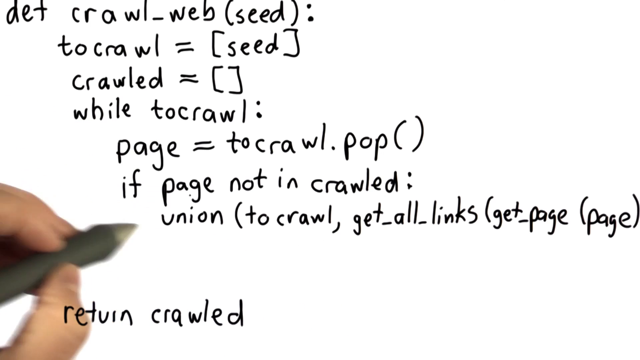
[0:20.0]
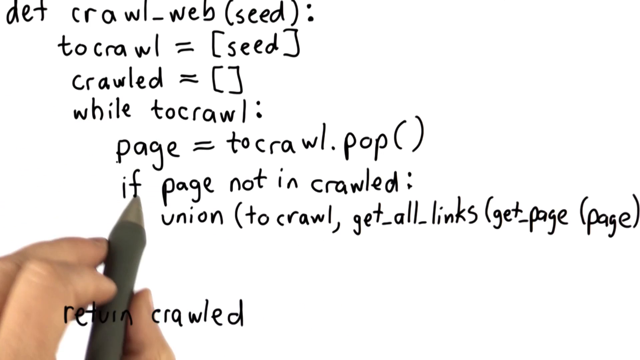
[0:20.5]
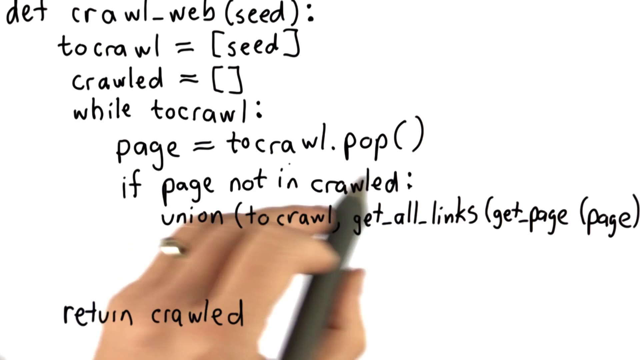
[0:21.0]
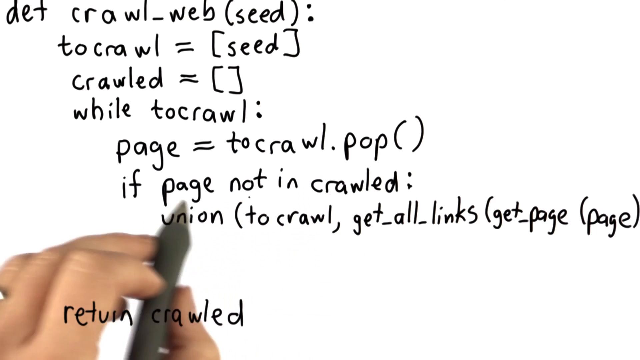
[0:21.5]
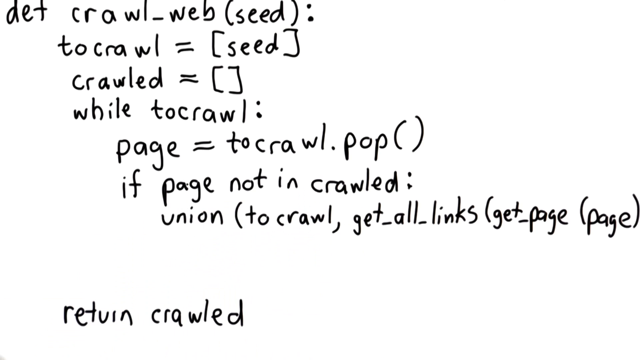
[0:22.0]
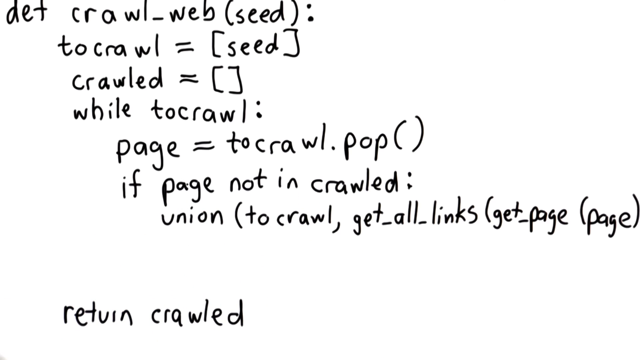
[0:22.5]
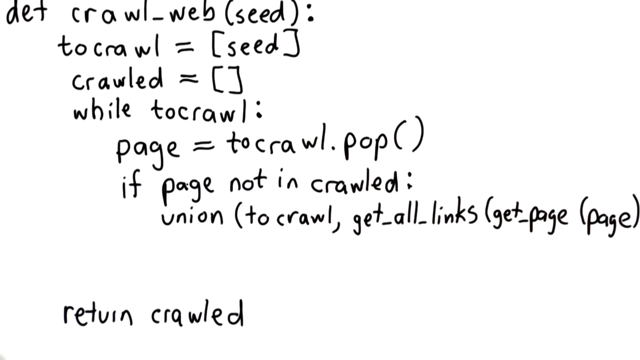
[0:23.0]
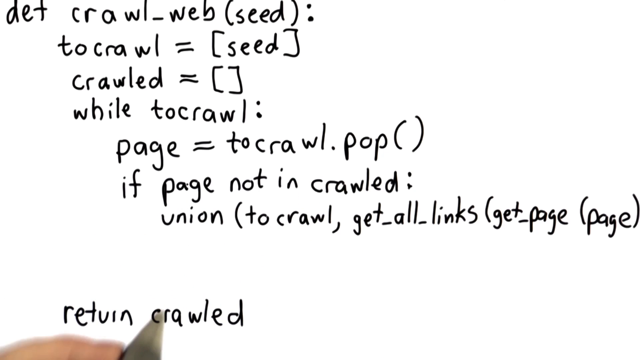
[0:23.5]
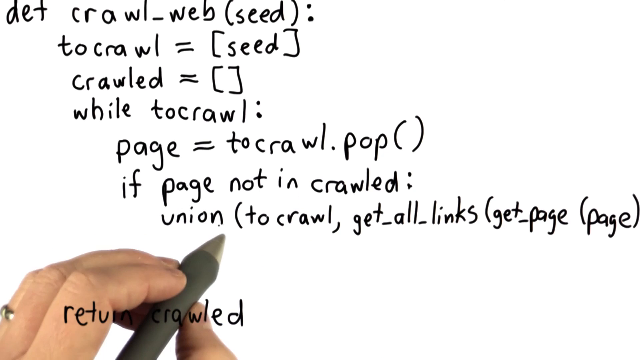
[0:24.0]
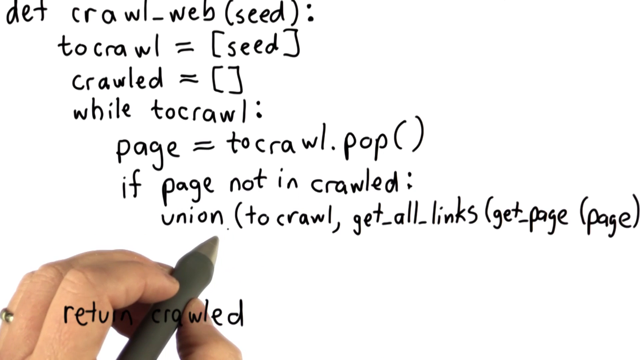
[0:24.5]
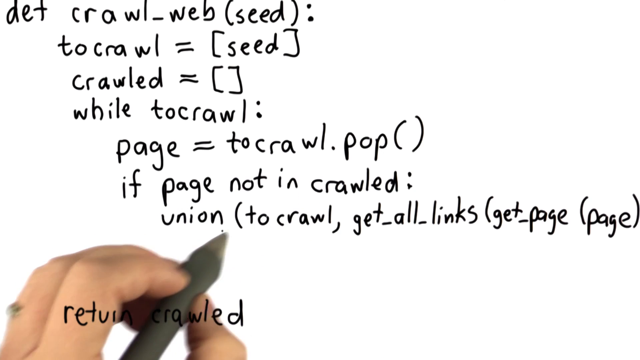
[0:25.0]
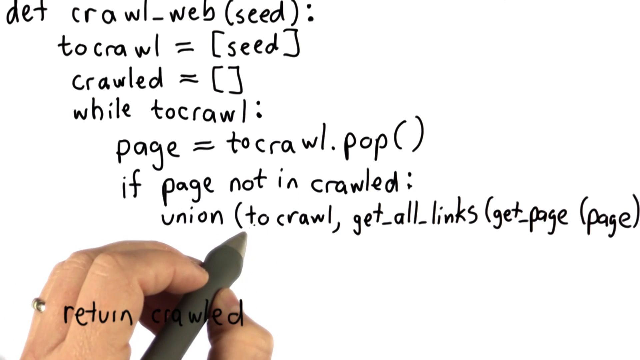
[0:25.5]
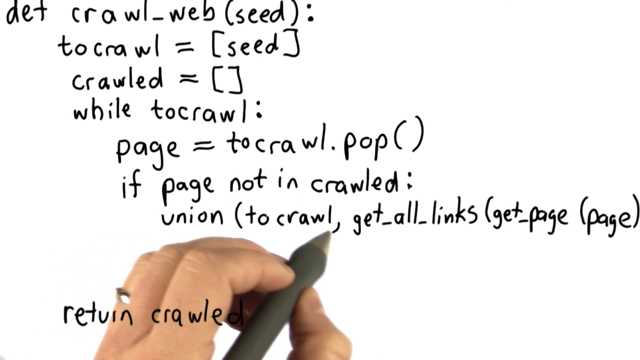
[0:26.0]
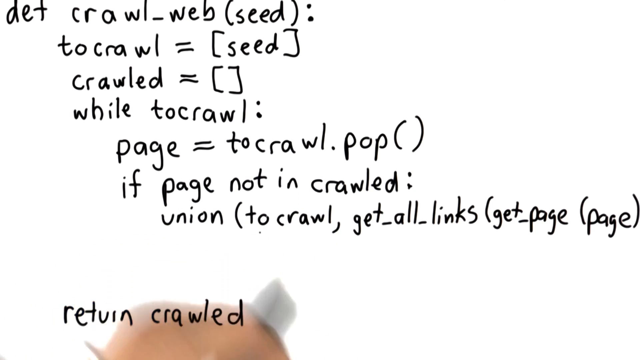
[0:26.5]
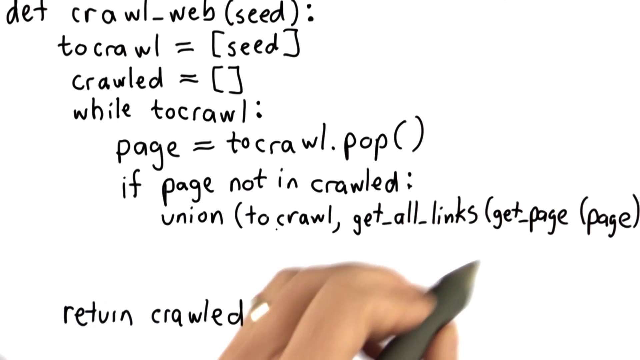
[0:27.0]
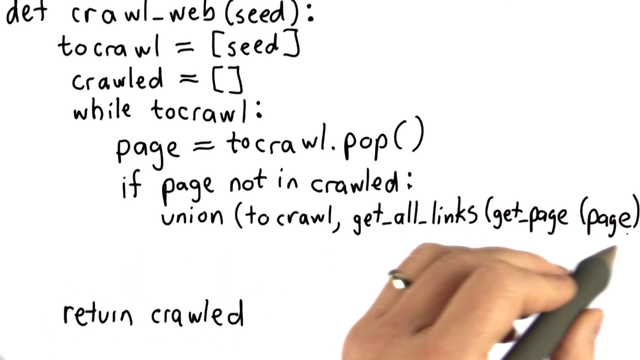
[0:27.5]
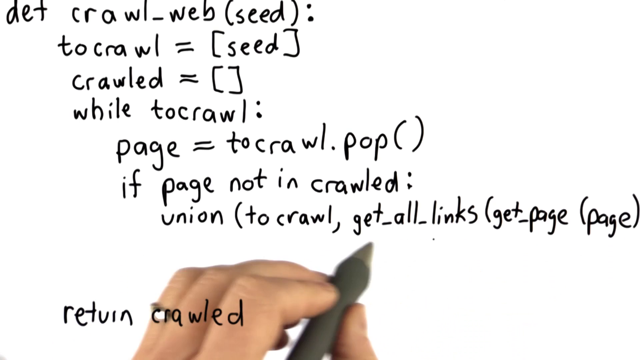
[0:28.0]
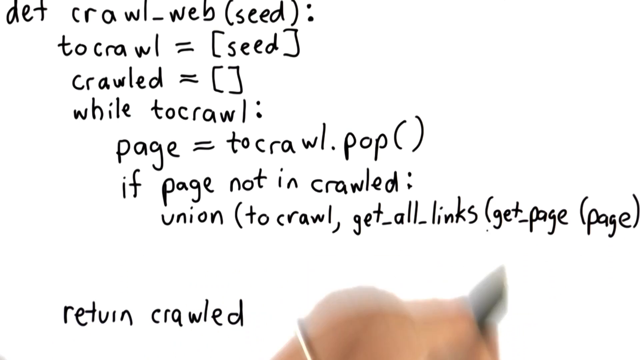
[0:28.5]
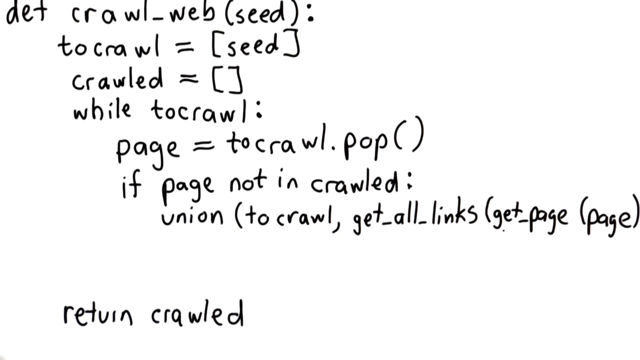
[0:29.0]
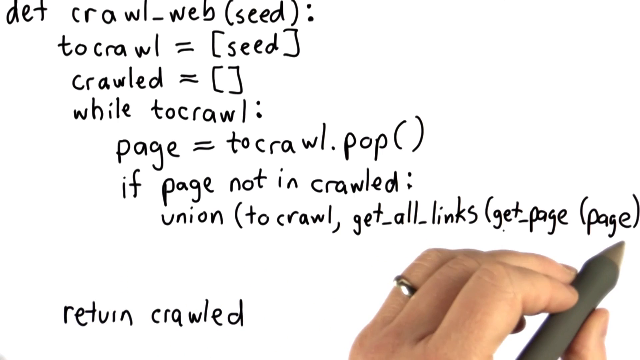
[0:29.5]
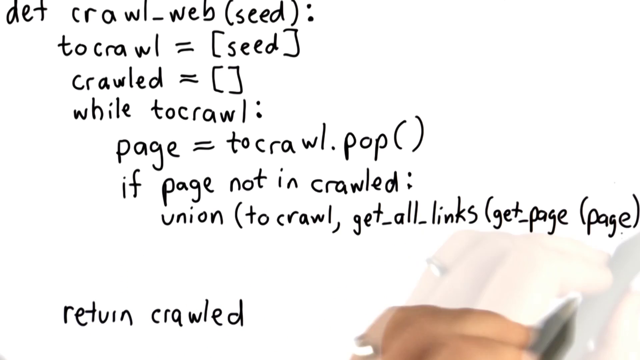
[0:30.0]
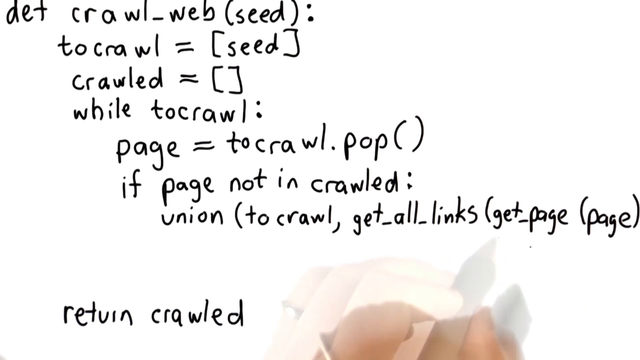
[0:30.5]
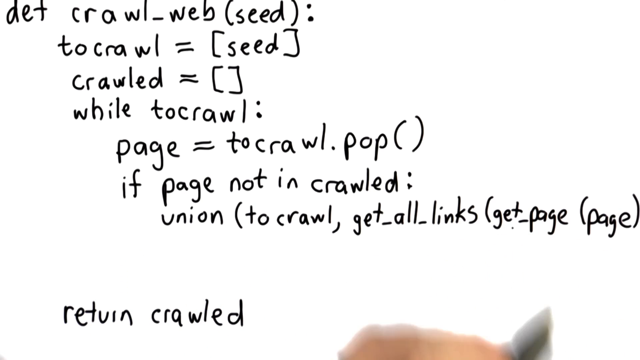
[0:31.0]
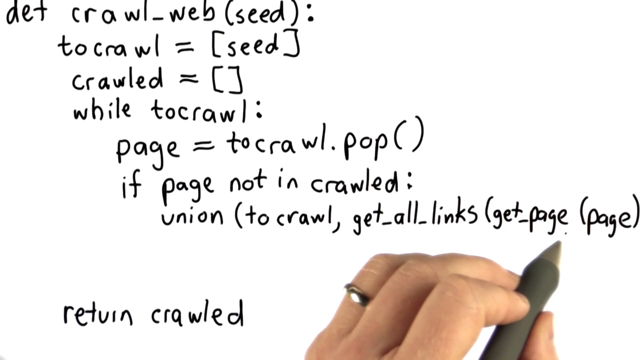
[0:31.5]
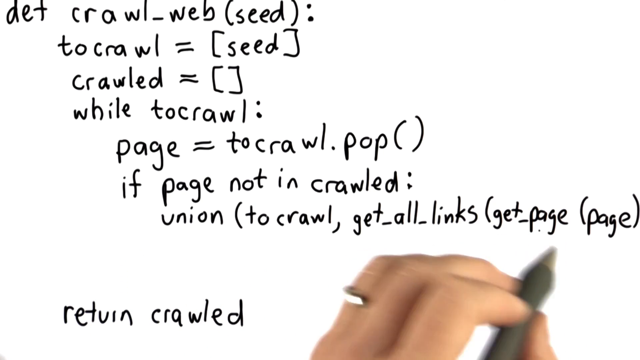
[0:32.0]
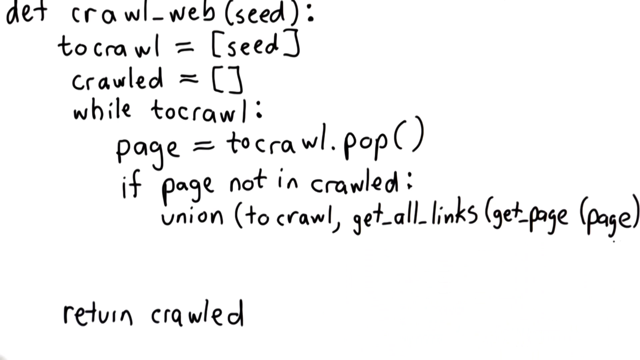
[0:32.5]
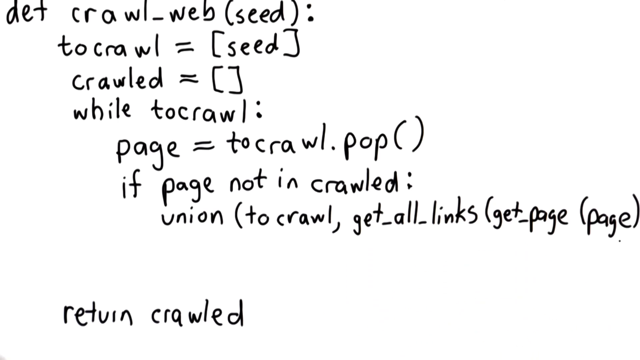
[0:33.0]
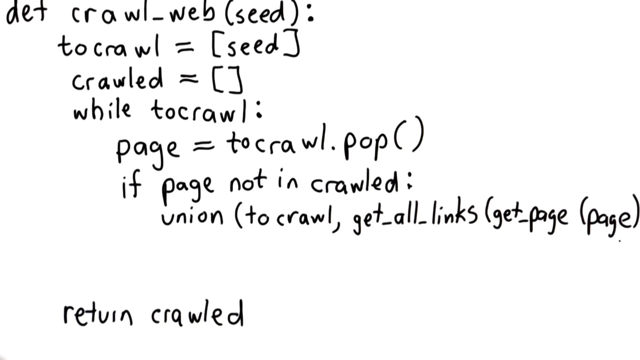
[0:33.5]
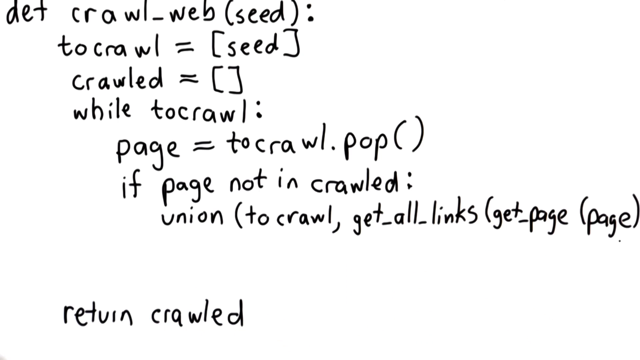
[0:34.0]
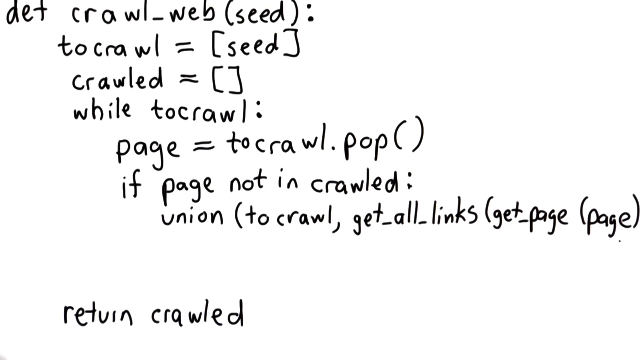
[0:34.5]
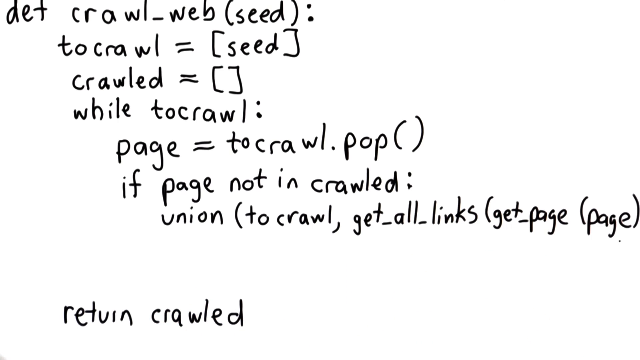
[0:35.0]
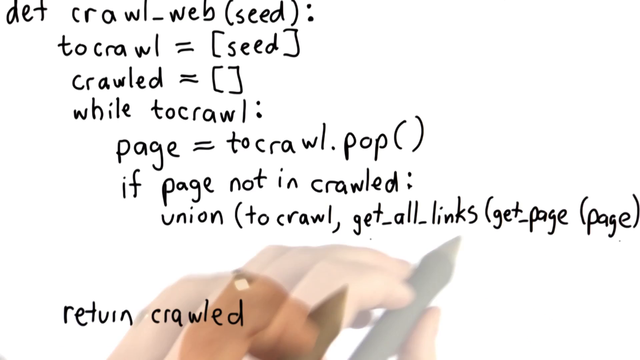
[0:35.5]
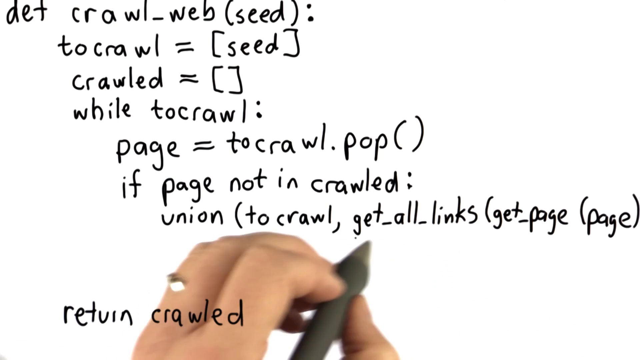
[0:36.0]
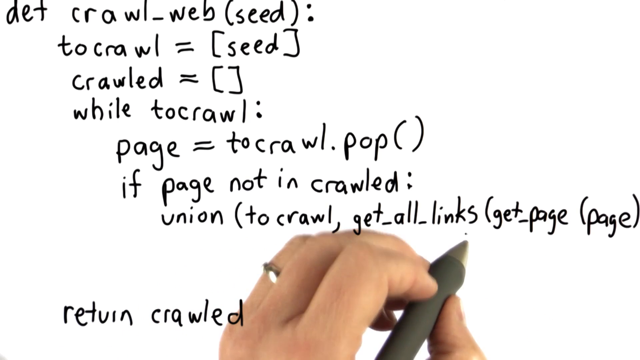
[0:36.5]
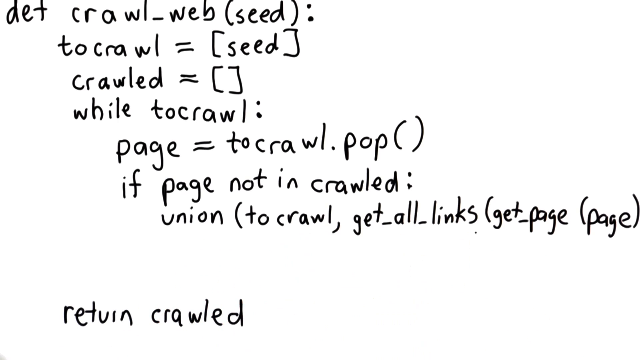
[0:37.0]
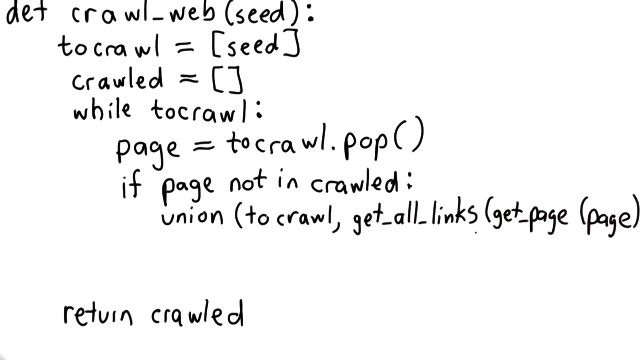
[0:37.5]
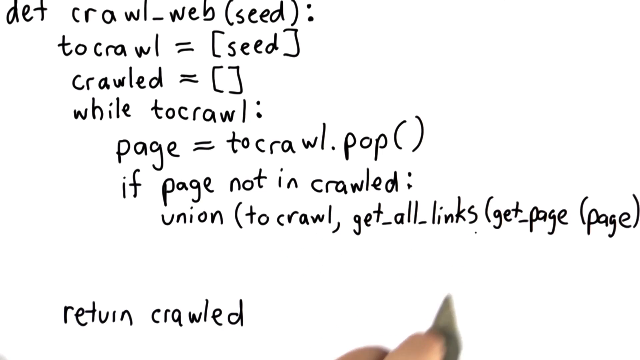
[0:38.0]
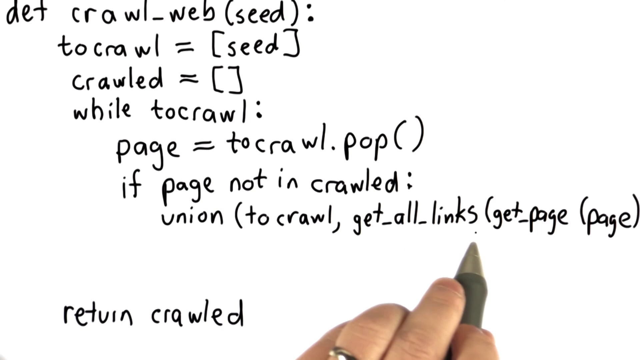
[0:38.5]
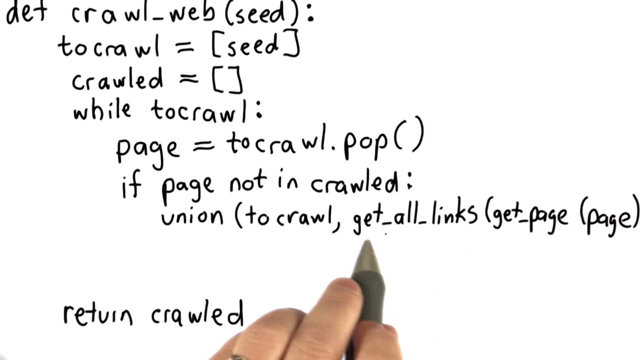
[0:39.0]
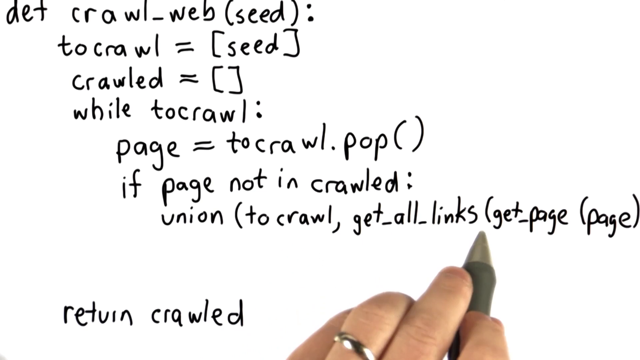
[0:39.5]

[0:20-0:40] Still looking at the same formula, the user emphasizes the last two lines: first the second-to-last line, "if page not in crawled", and then the last line, seemingly emphasizing the word crawl and then "get all links" and "get page", "page". The user emphasizes the last line repeatedly, around three times at first and then seemingly three more times. The last line reads "union", parentheses, "to crawl, get_all_links", parentheses, "get page", parentheses, "page", with the final word "page" in parentheses. The line before the last is pointed at first, and then the last line is pointed at with the pen, as if indicating that the last line is the result.